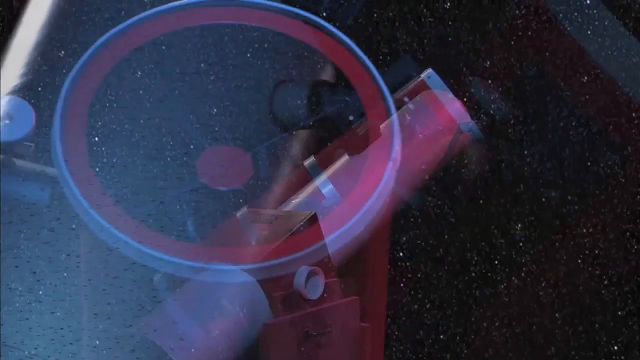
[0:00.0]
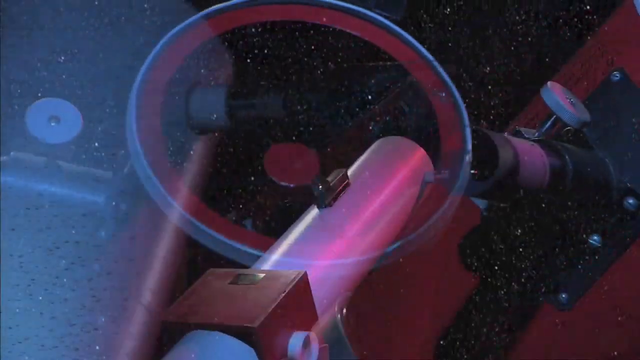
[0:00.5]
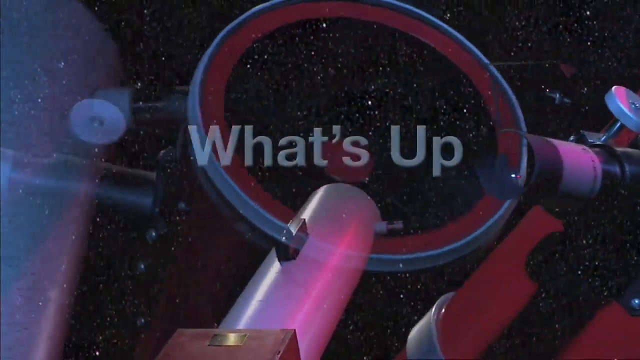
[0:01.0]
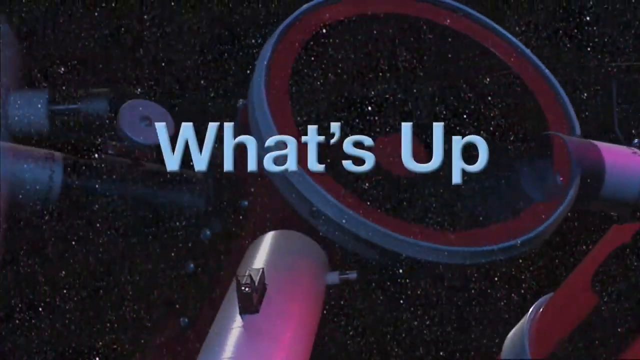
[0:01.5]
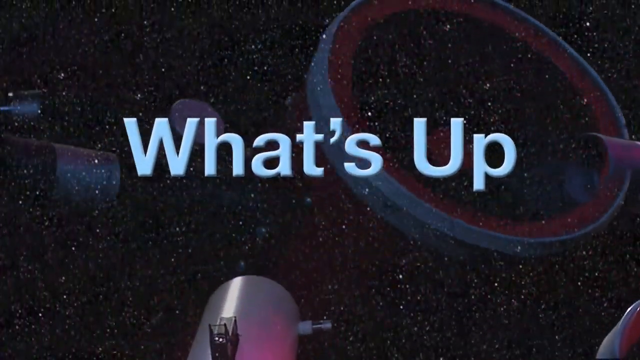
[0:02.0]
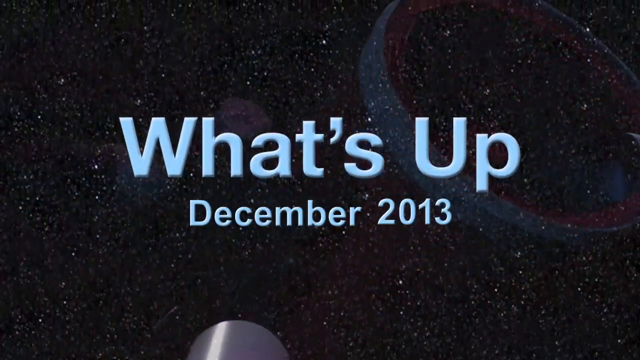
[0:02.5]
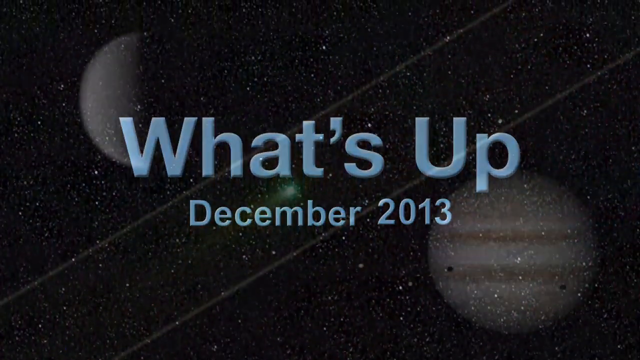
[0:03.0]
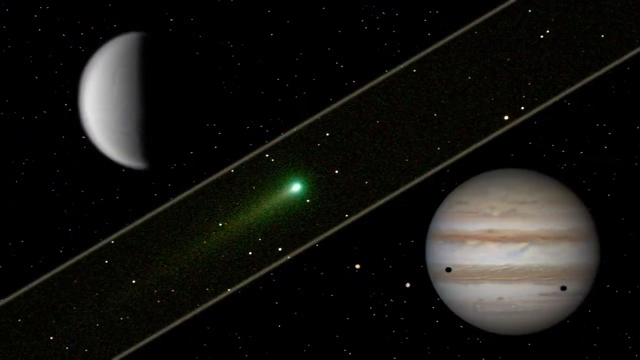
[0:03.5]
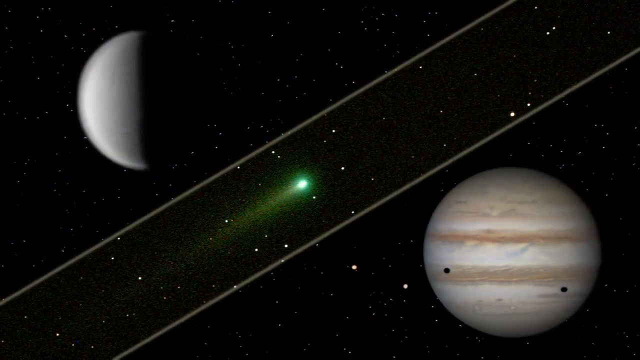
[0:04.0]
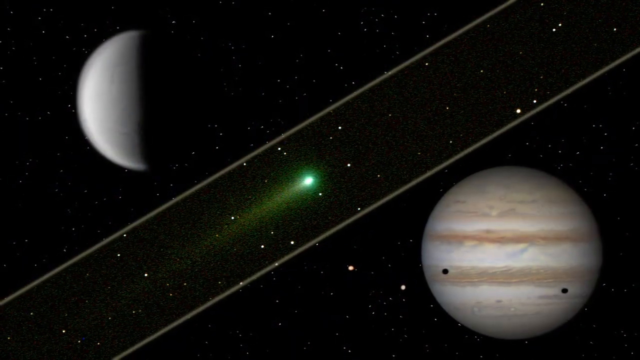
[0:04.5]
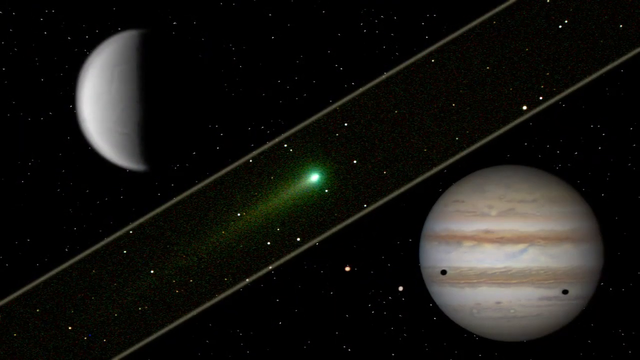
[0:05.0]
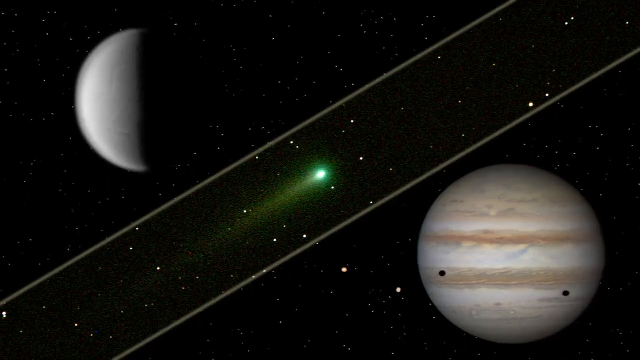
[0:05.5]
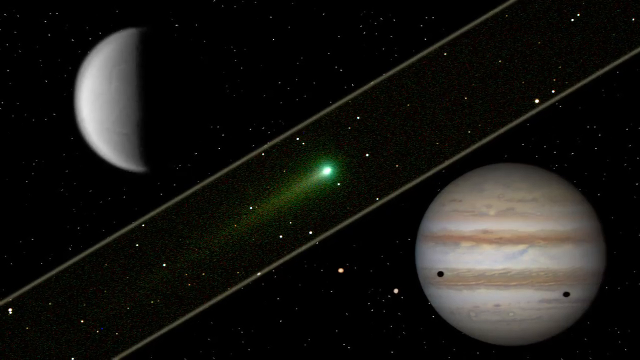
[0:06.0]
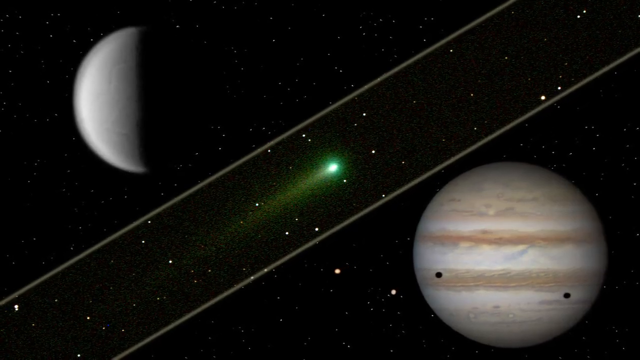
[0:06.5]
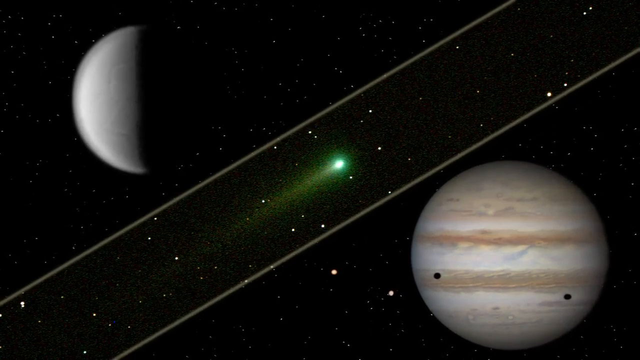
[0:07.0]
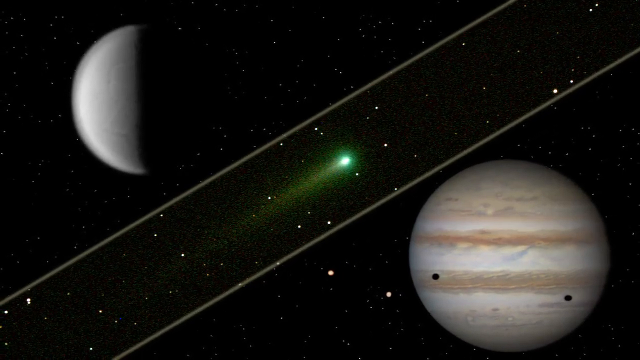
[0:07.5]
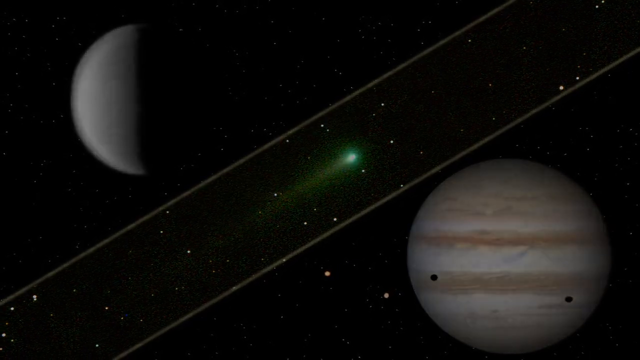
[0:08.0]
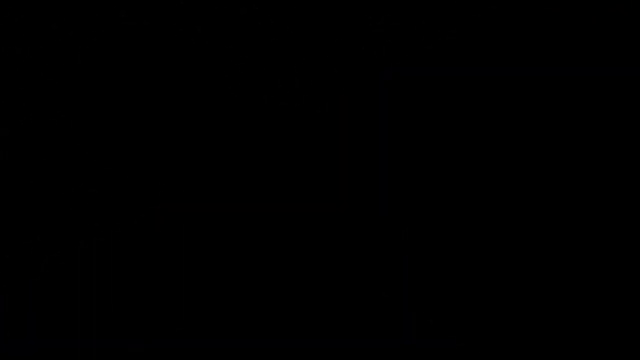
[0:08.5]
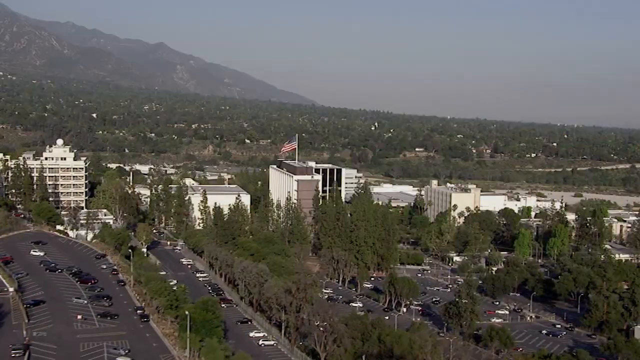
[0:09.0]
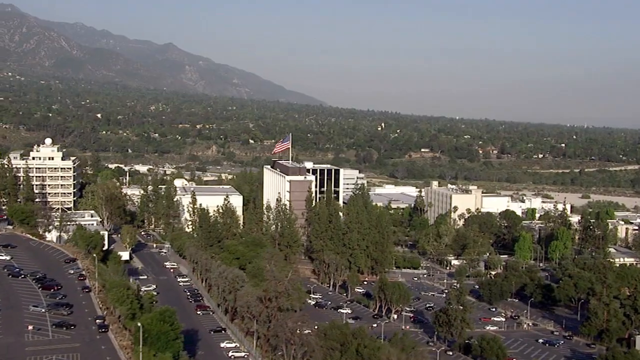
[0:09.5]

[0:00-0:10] The video appears to be about stars or satellites, showing "what's up, December 2013." The moon is on the left and what looks like the Earth is on the right, and in the middle something that looks like a green satellite shoots between the two of them. A metropolitan city with many tall buildings, blue sky and tall green trees is shown, apparently in the path of the meteor being shown.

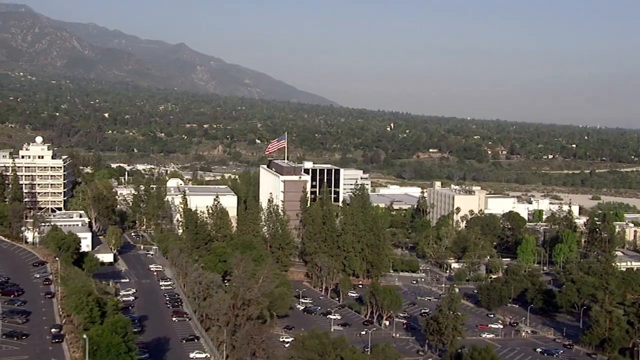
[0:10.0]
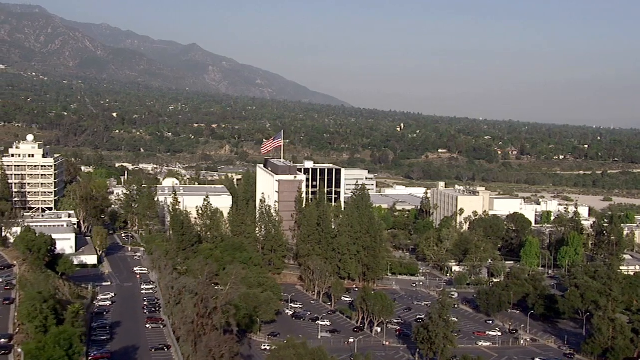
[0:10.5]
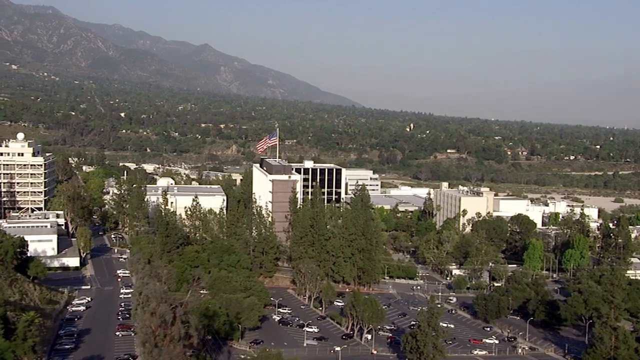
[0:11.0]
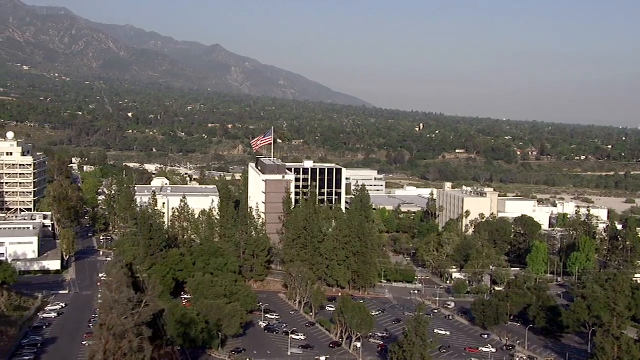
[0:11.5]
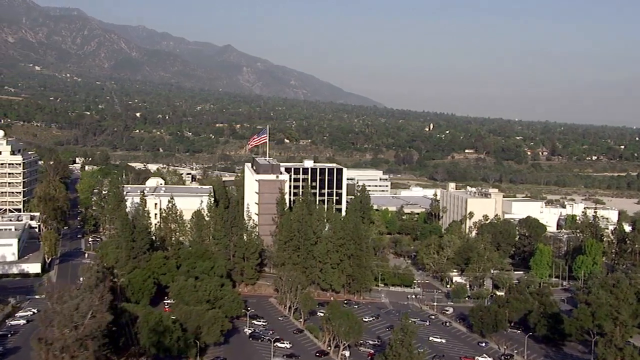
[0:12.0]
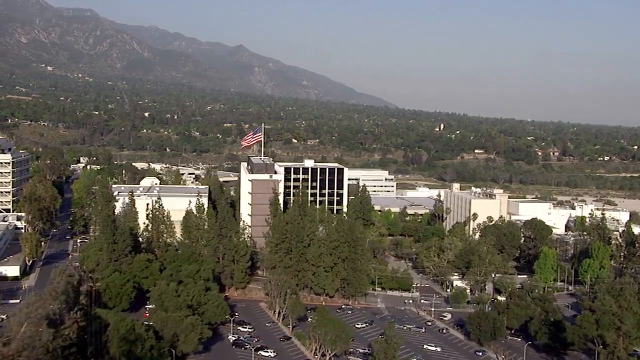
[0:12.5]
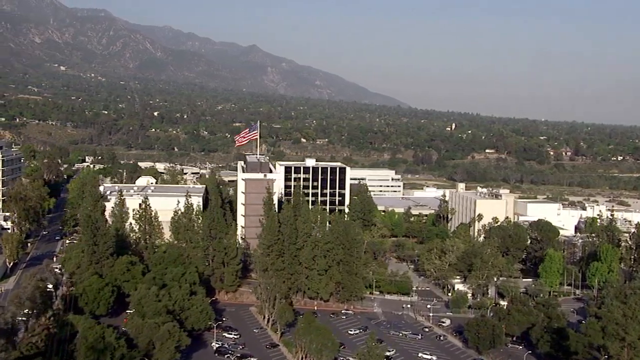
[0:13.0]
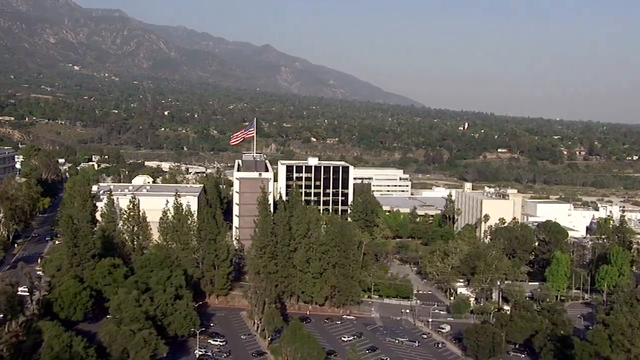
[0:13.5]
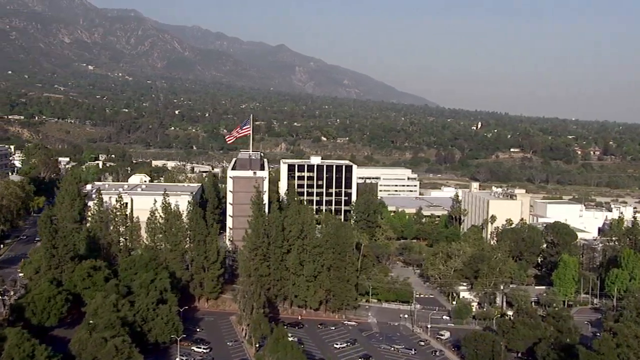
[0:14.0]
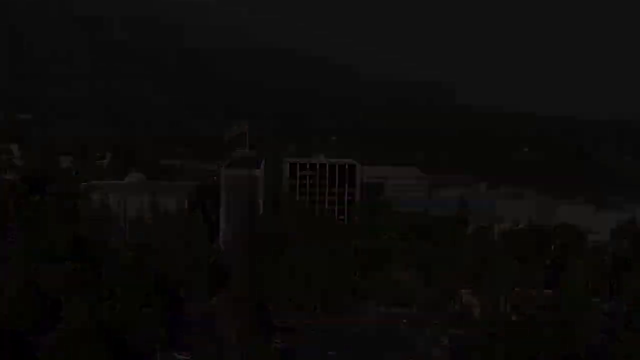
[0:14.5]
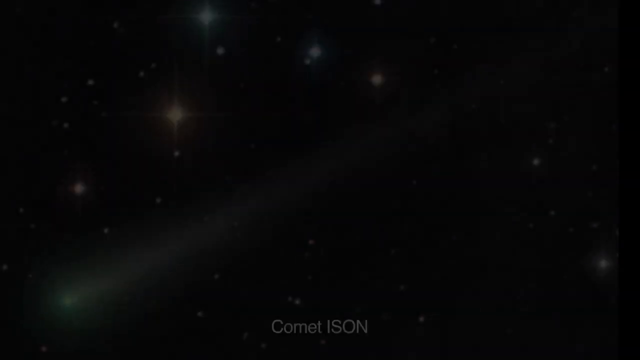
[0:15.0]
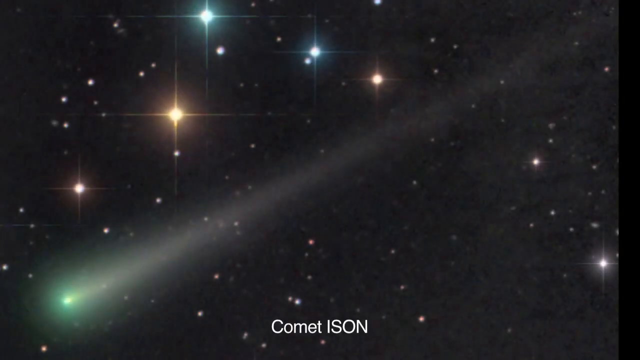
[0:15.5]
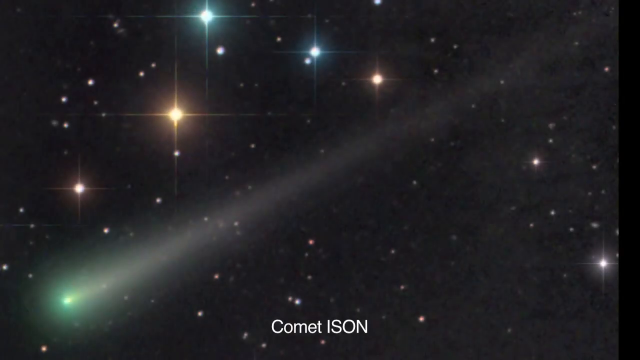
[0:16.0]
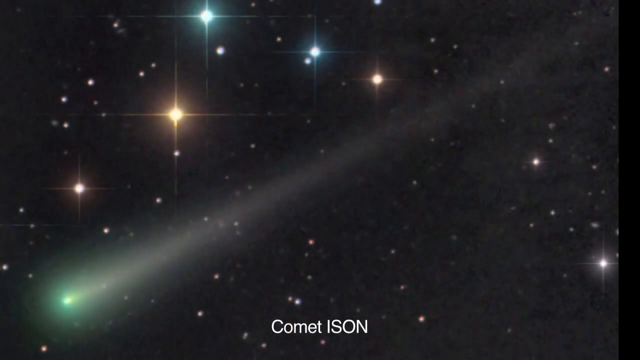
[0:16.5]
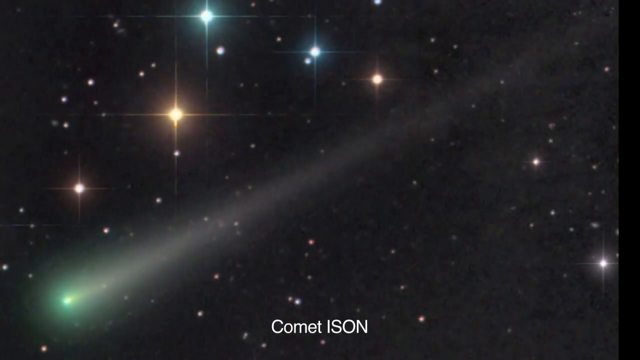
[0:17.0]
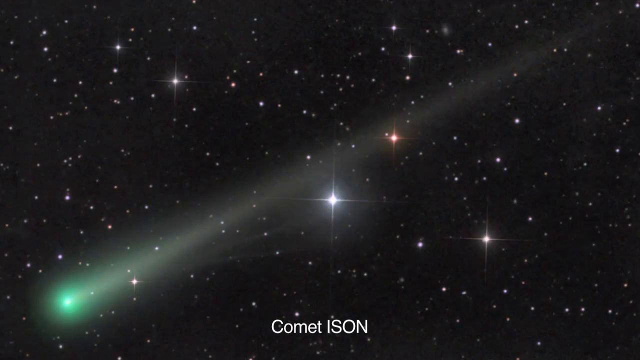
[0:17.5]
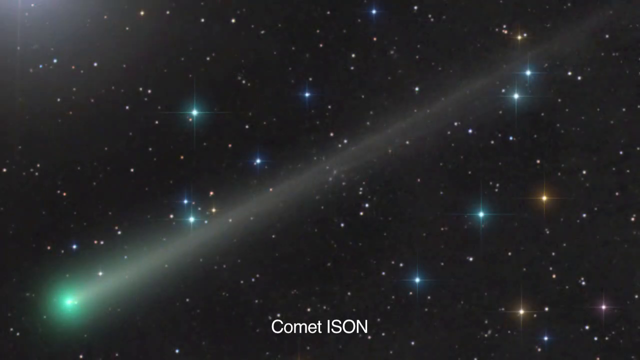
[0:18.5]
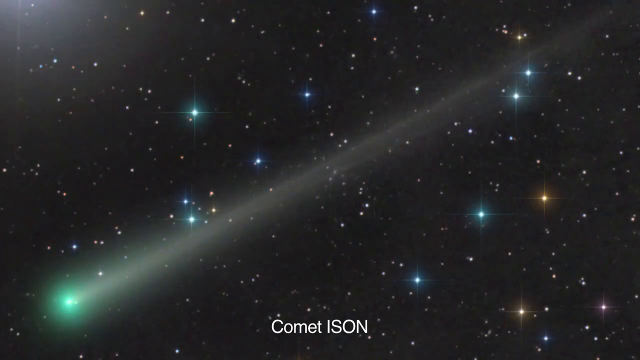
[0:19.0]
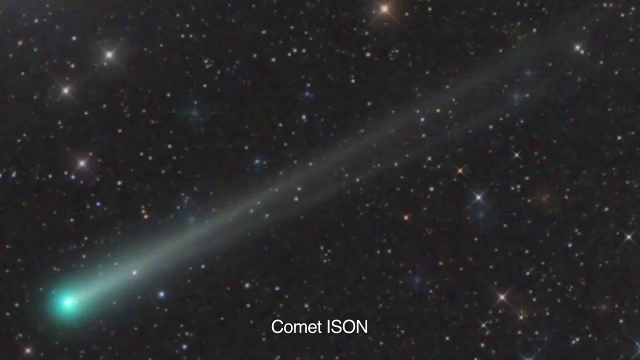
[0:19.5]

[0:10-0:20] The metropolitan city appears, with a tall building flying the United States flag. Many comets are shown in the sky. The city returns: tall white buildings, mountains in the background and valleys of green trees. One tall white building looks like it has windows in the front, with the United States flag on a pole at the top. Cars are parked on the street. The sky seems to be cast in gray and cloud, as if it might be getting ready to rain. More tall buildings appear, and comets, ISON, are in the background.